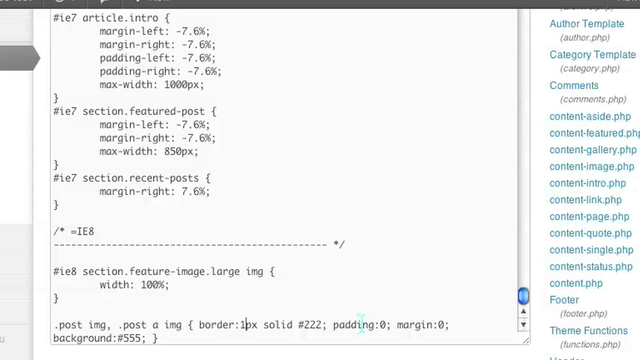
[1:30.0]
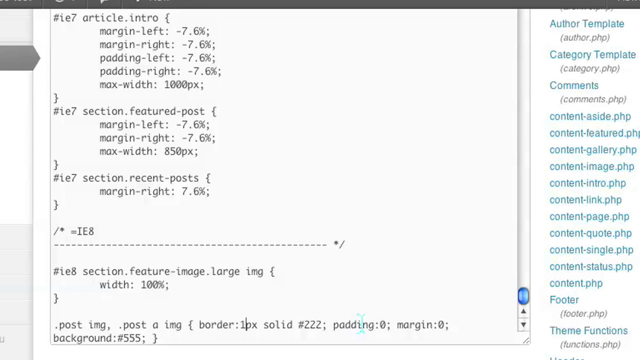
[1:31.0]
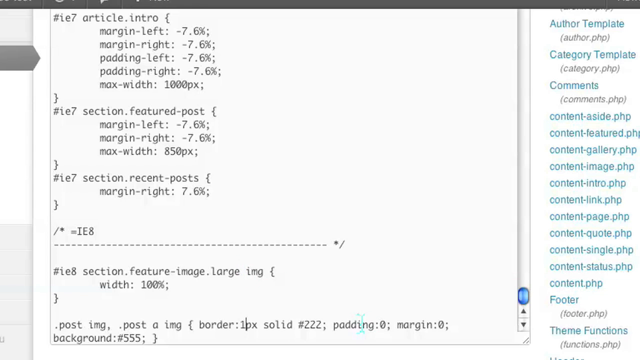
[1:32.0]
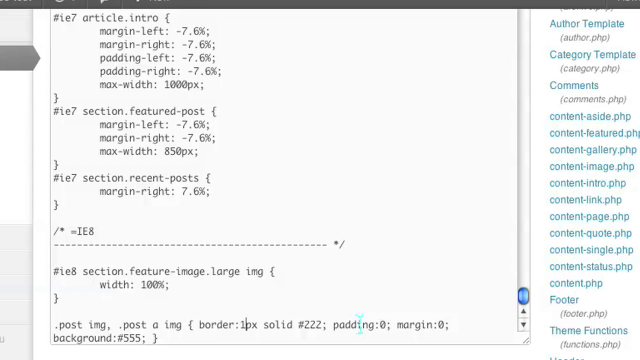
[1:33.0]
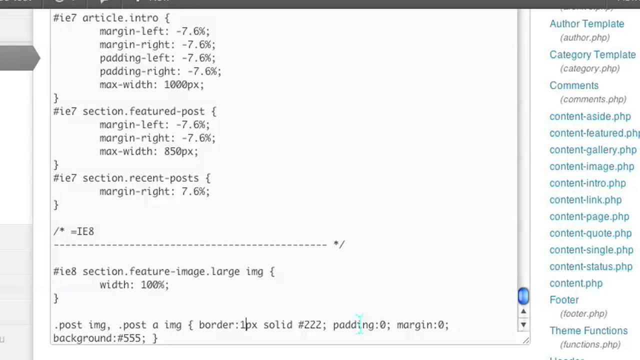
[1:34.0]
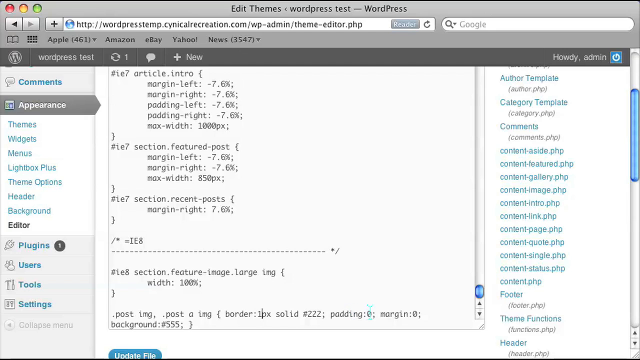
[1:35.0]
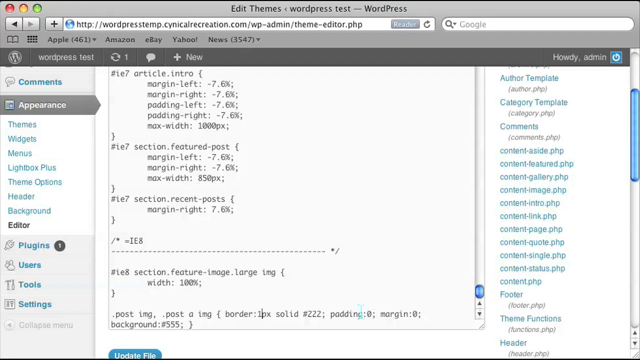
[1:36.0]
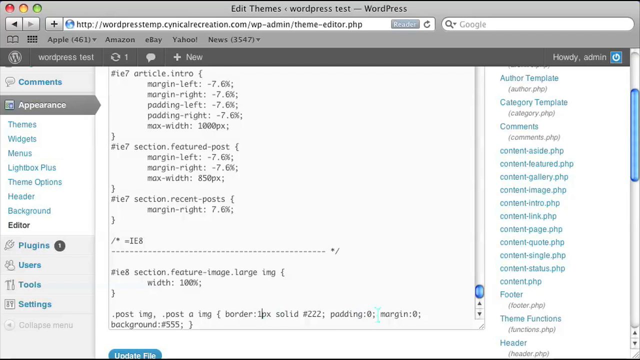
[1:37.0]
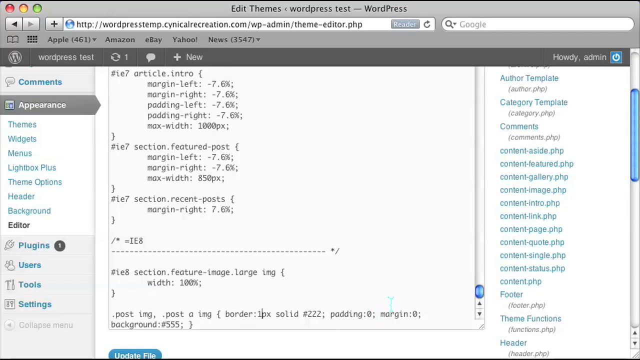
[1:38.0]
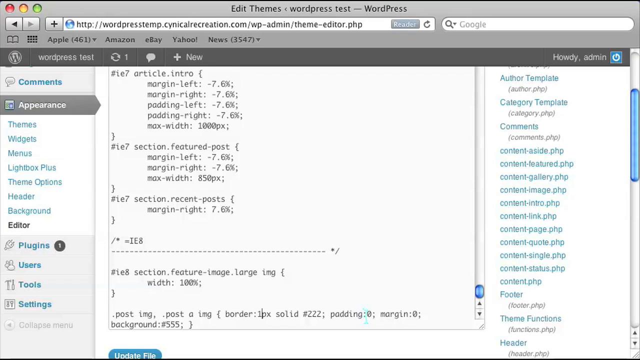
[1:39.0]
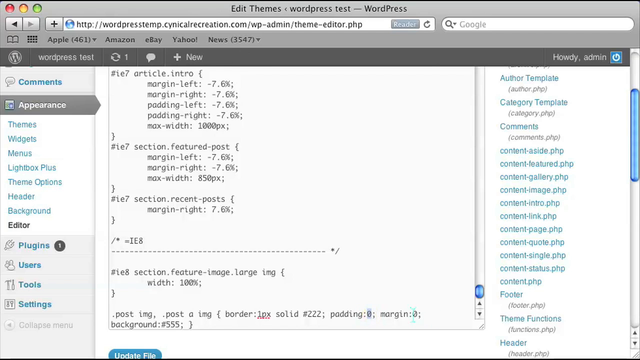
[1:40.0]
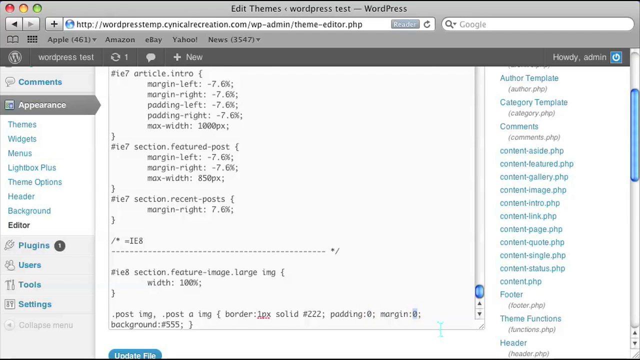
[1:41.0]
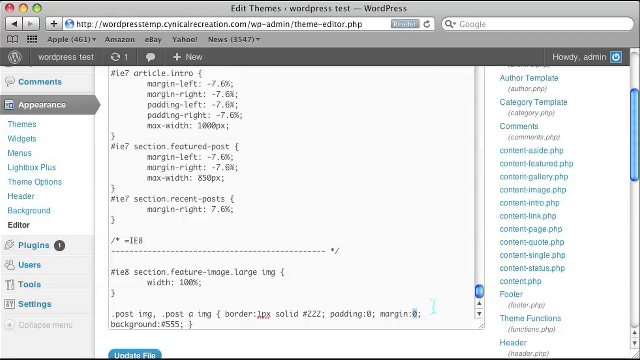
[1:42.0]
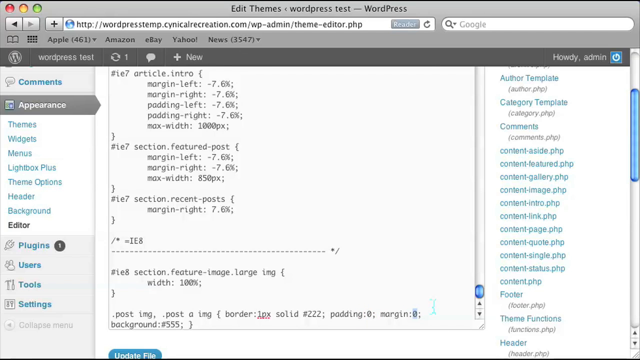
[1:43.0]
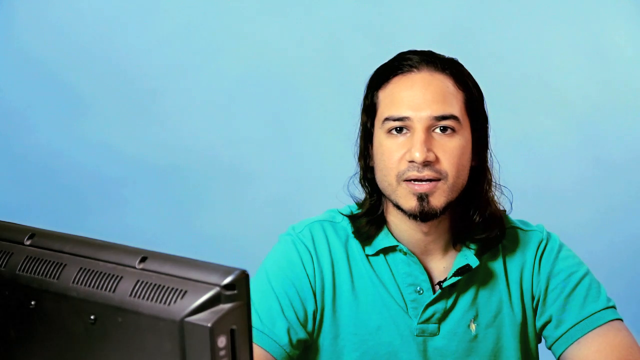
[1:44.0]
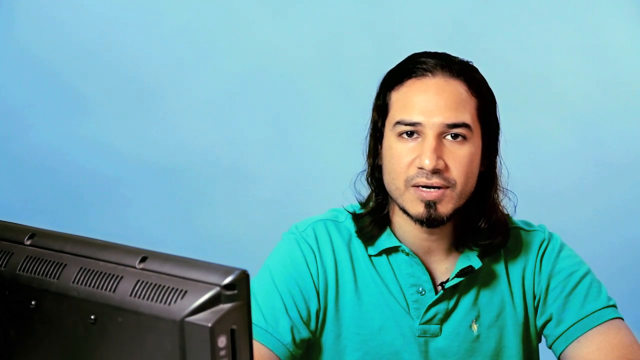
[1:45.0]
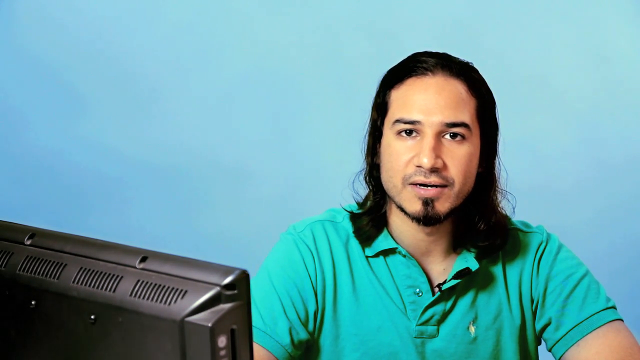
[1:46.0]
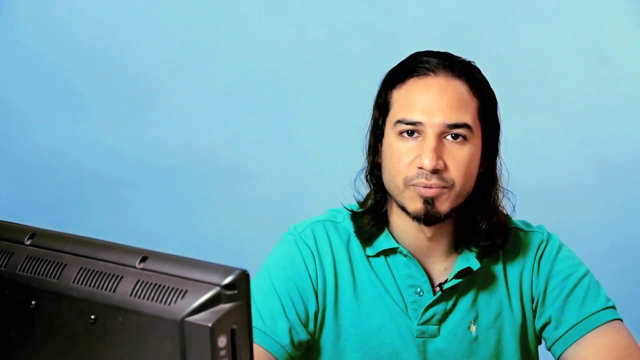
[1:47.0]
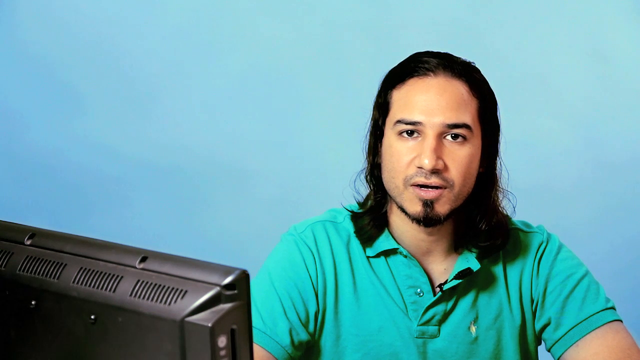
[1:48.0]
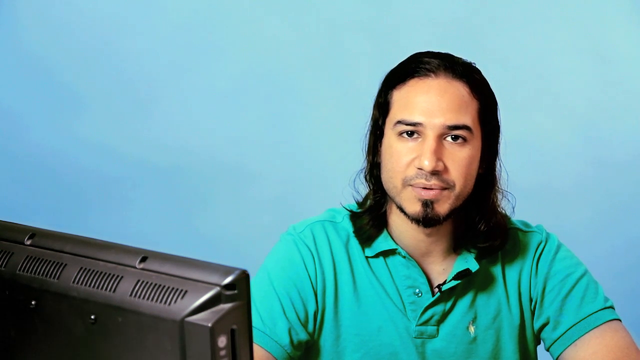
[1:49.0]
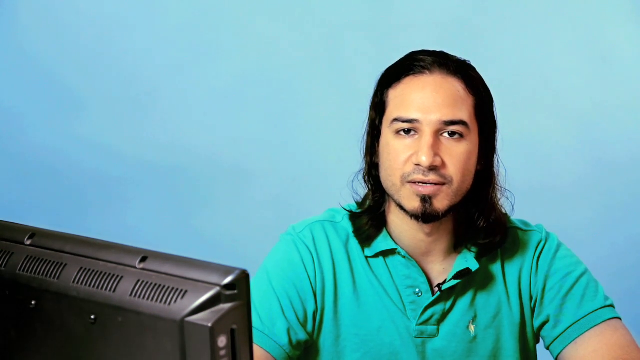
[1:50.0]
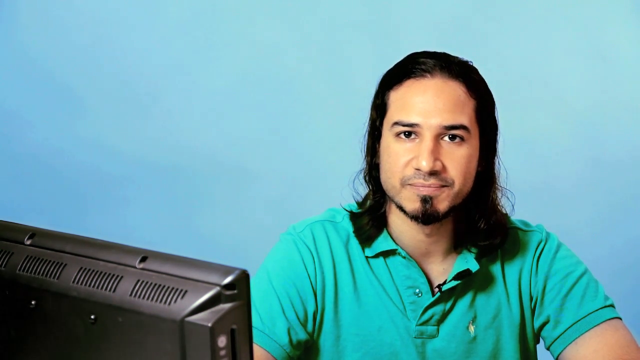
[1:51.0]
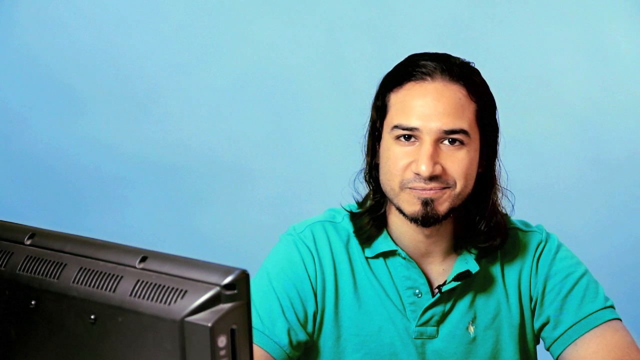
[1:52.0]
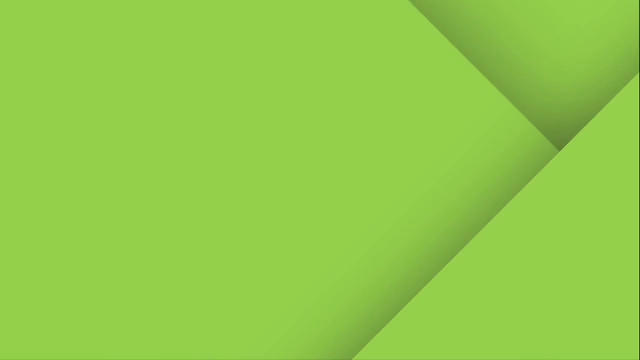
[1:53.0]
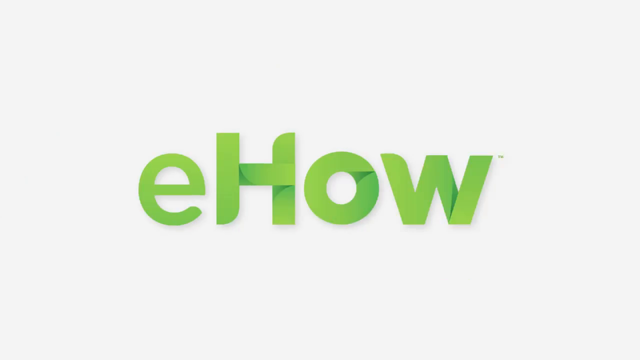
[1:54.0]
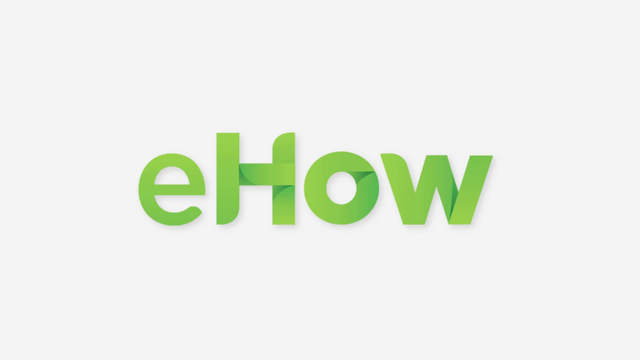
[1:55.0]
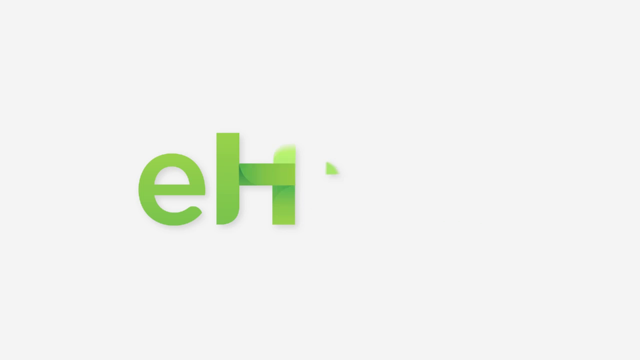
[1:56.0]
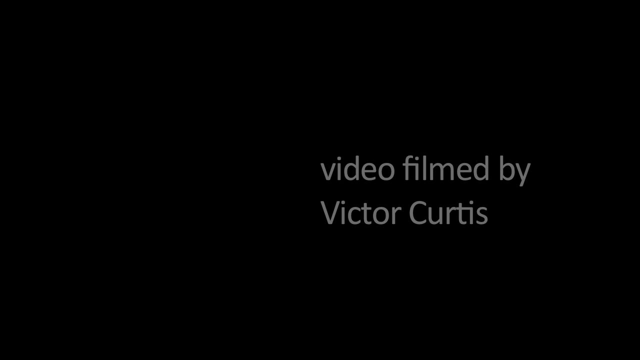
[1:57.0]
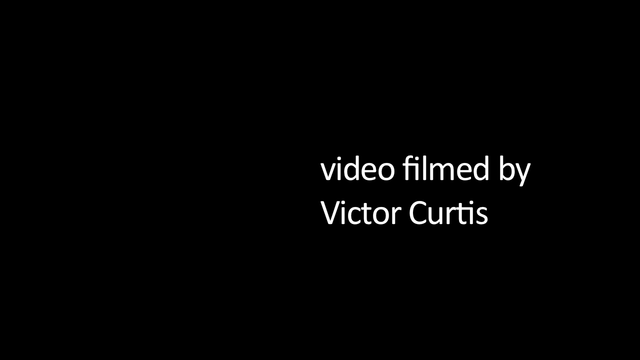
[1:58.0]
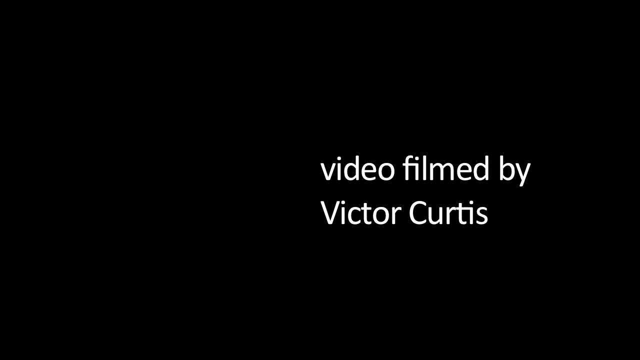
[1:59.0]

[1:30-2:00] A white computer page shows black writing that reads "article info", with "margin-left", "margin-right", "padding-left", "padding-right" and "max-width" listed below one another. On the right side of the screen, blue words run from top to bottom: "author templates", "category templates", "comments", "content-aside.php", "content-featured.php", "content-gallery.php", and other items ending in "-.php". A computer pointer is on the screen, then the view zooms out and moves to some words at the bottom. The video then returns to the Mexican man talking; he looks straight at the camera, talks, blinks and slightly nods his head up and down, moving little else, and gives a slight smile. The screen turns yellow, then white, with "Ehal" in green letters. That disappears and the screen turns black, with "Video filmed by Victor Curtis" in white letters on the right side.